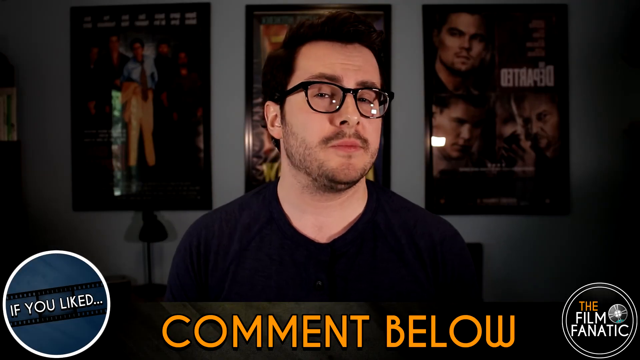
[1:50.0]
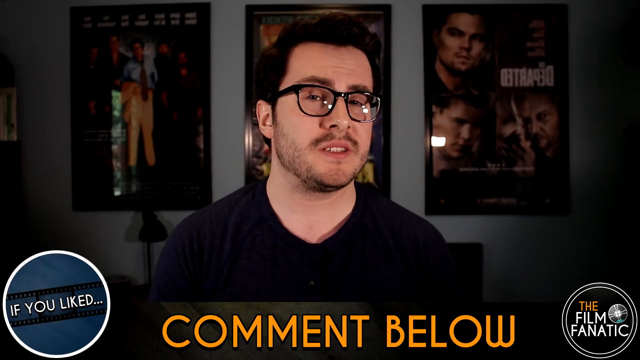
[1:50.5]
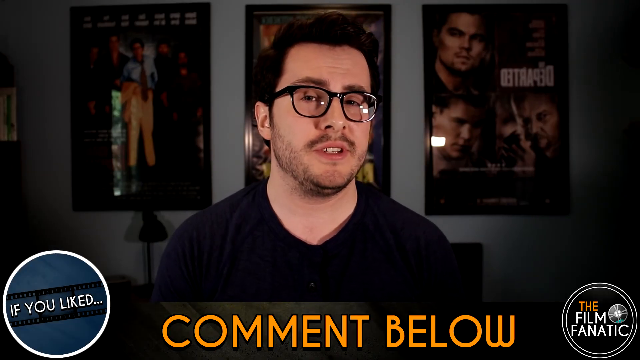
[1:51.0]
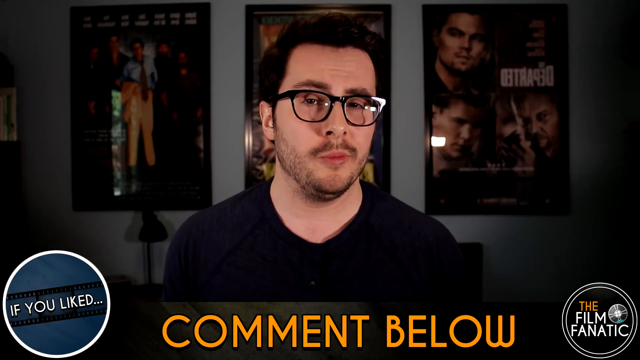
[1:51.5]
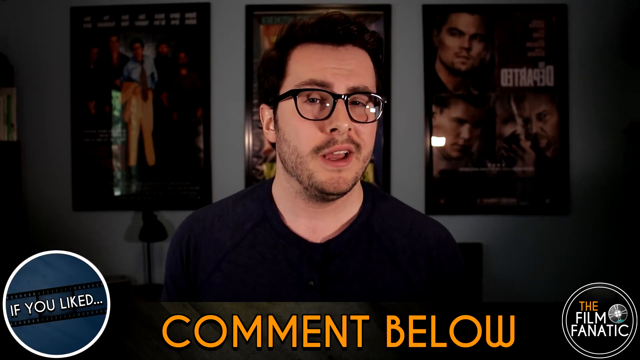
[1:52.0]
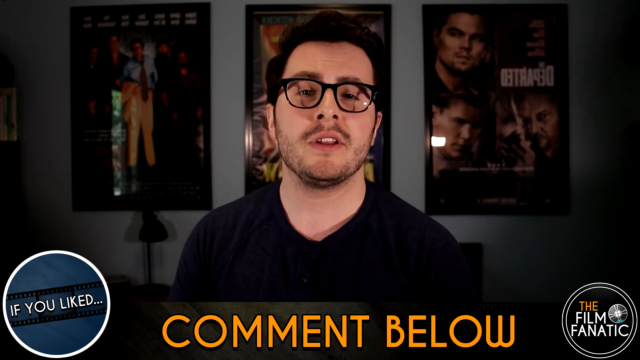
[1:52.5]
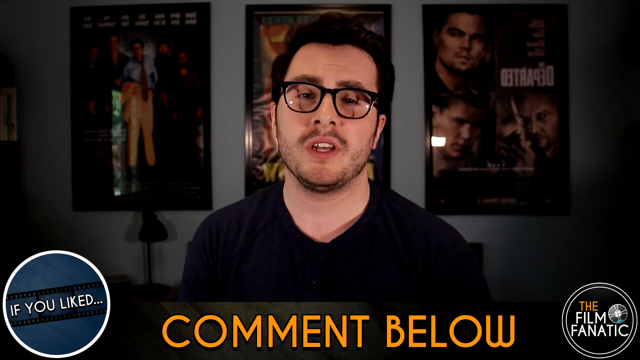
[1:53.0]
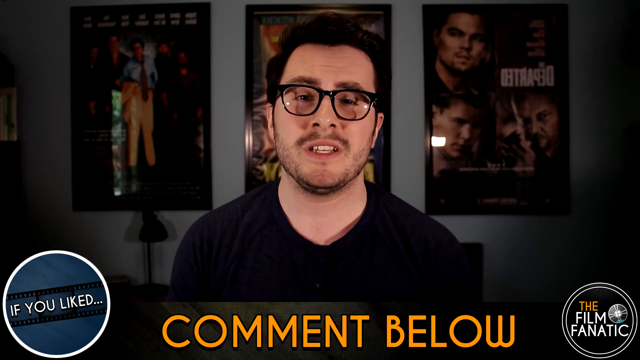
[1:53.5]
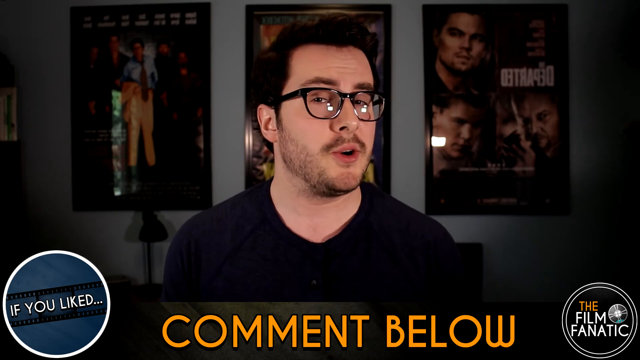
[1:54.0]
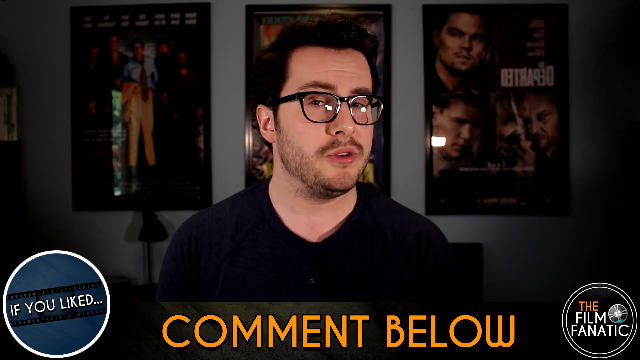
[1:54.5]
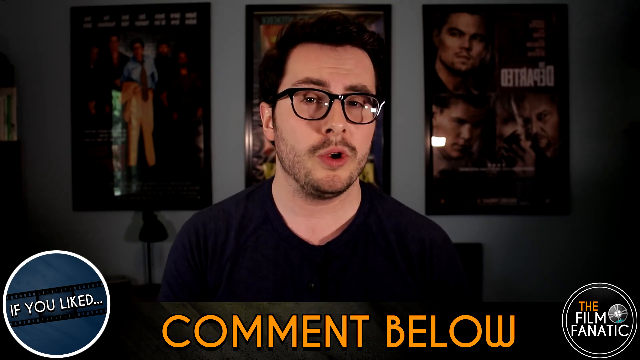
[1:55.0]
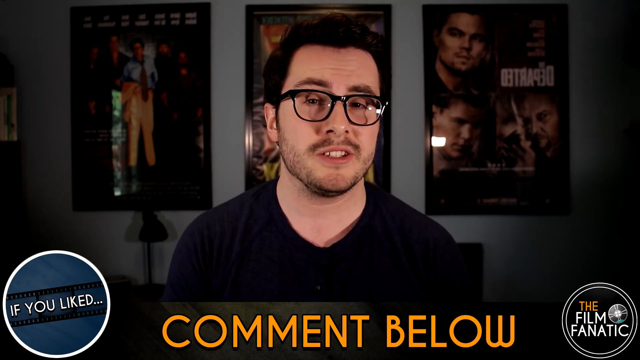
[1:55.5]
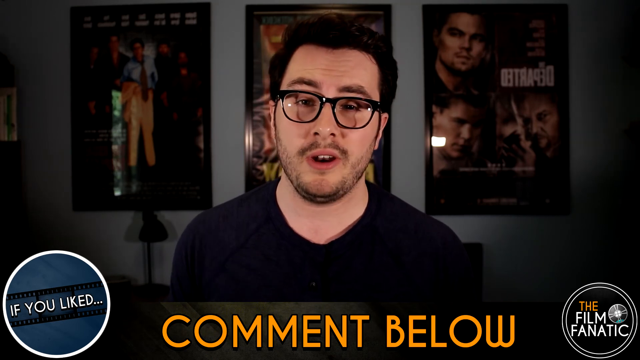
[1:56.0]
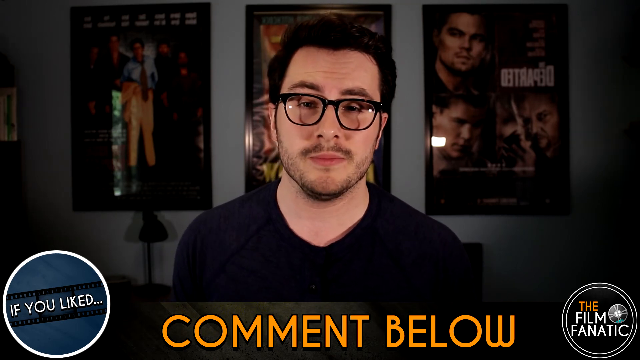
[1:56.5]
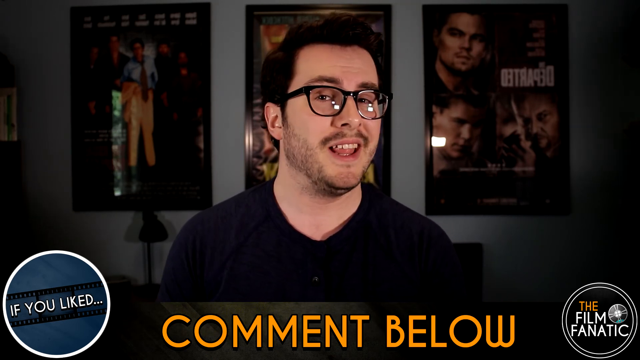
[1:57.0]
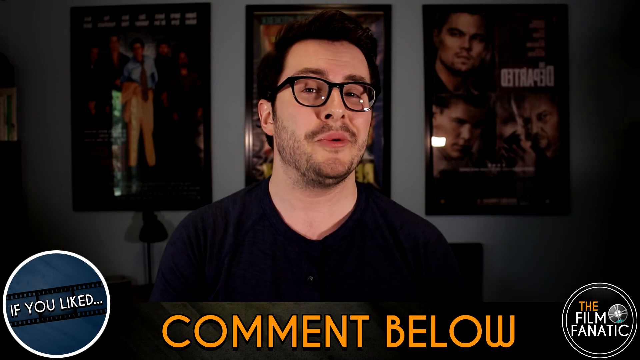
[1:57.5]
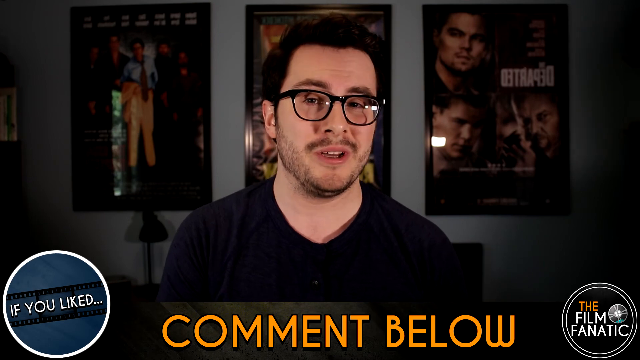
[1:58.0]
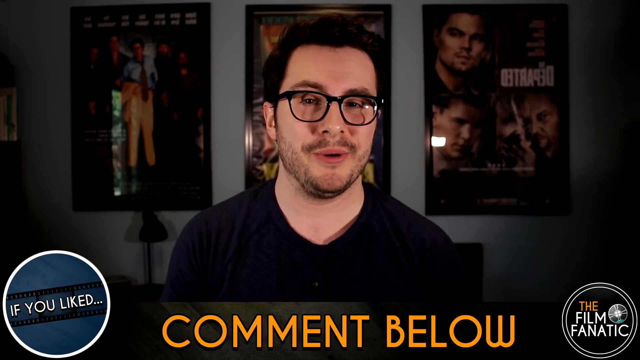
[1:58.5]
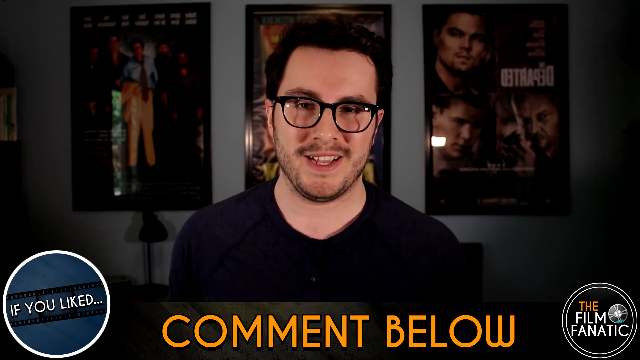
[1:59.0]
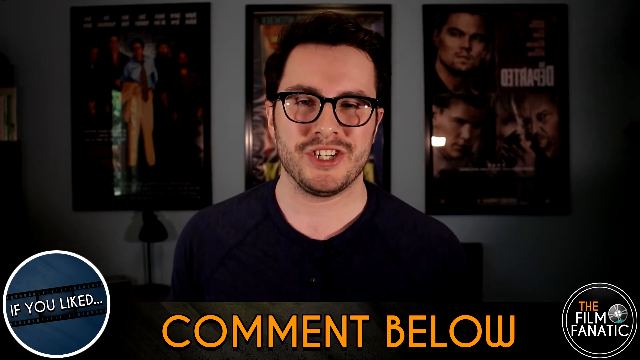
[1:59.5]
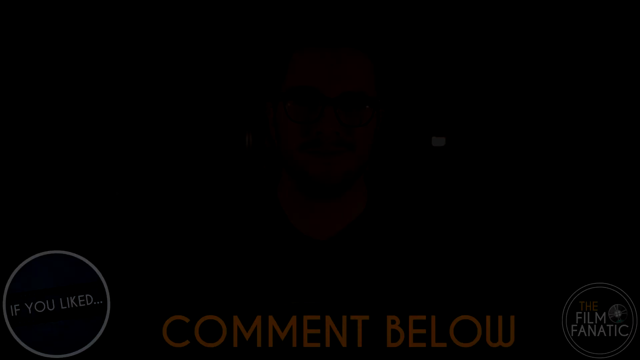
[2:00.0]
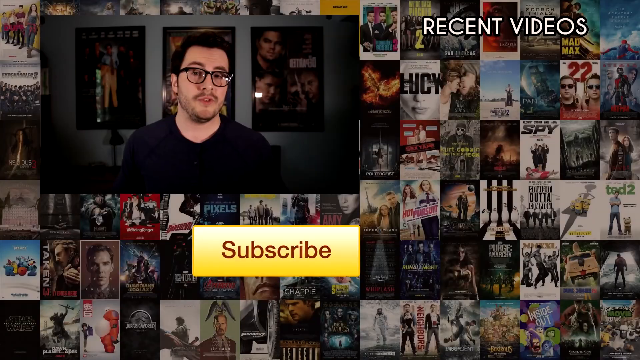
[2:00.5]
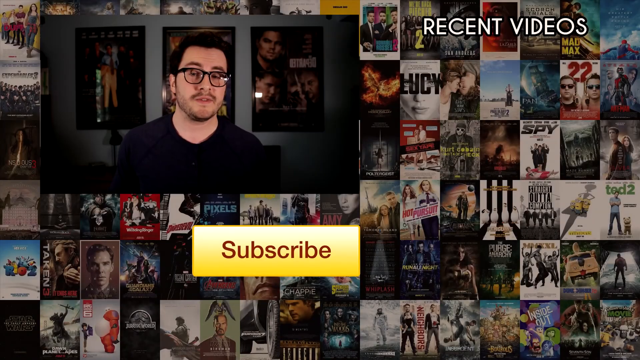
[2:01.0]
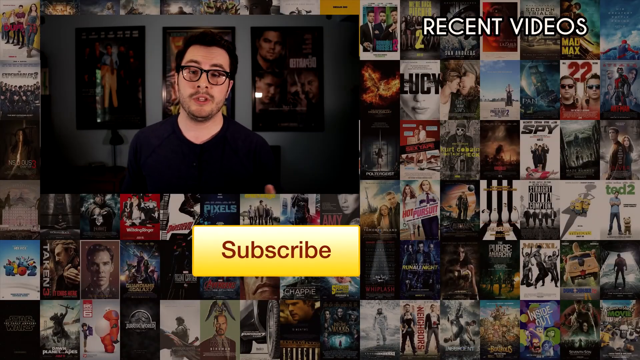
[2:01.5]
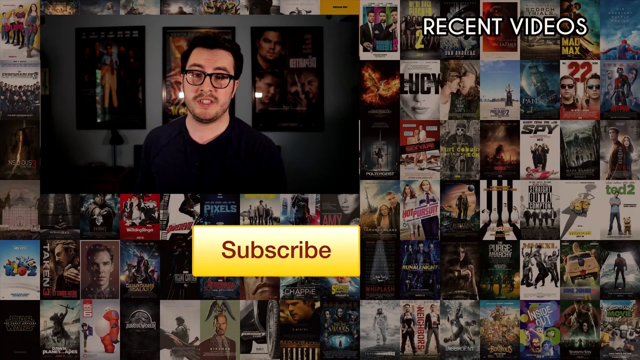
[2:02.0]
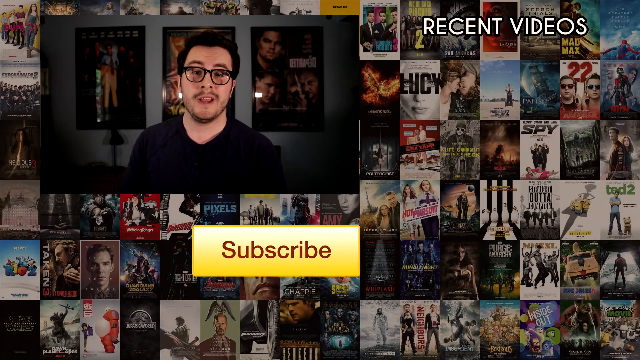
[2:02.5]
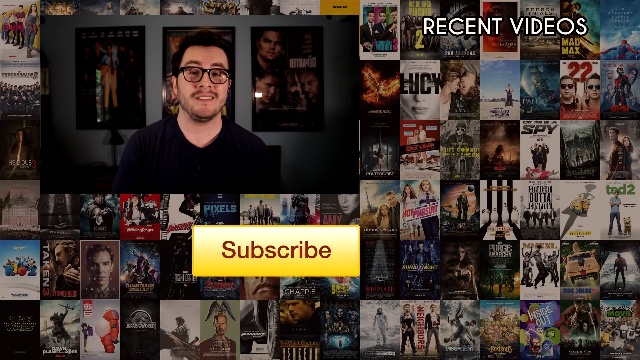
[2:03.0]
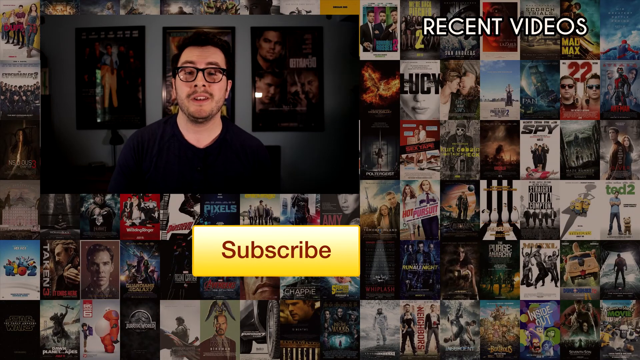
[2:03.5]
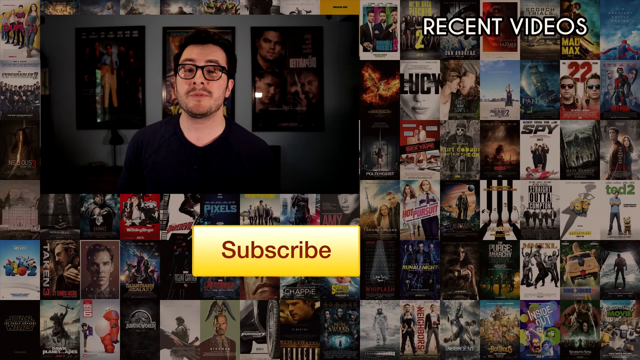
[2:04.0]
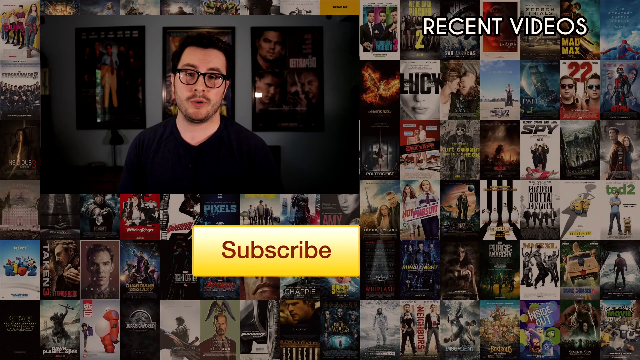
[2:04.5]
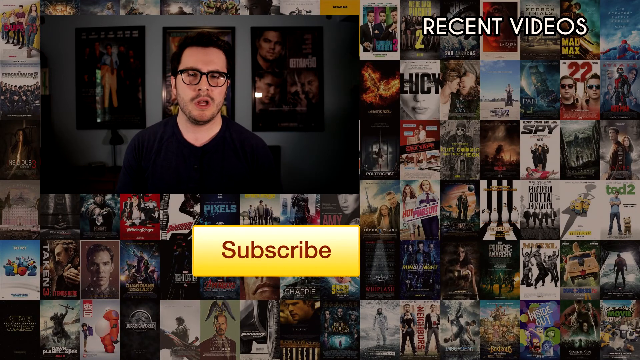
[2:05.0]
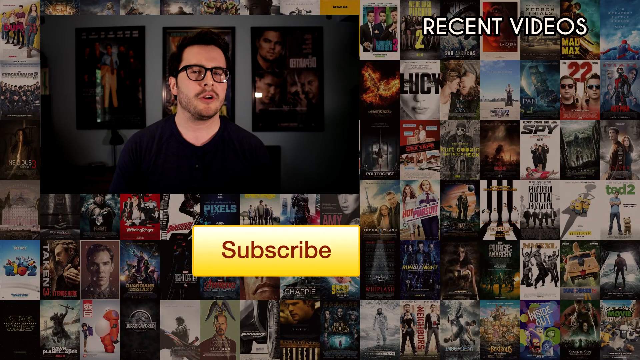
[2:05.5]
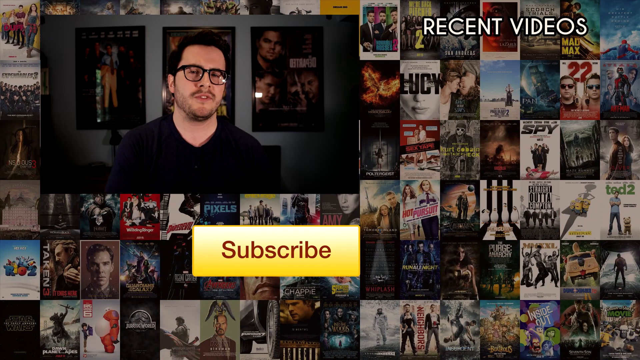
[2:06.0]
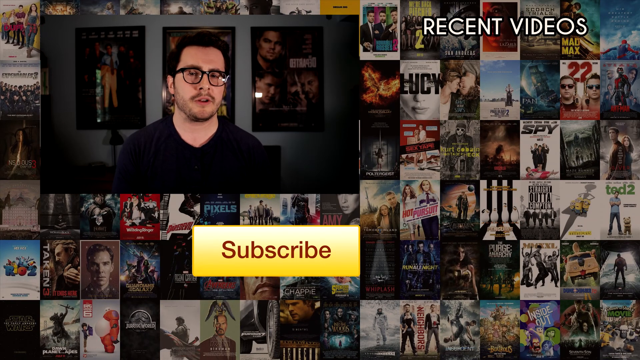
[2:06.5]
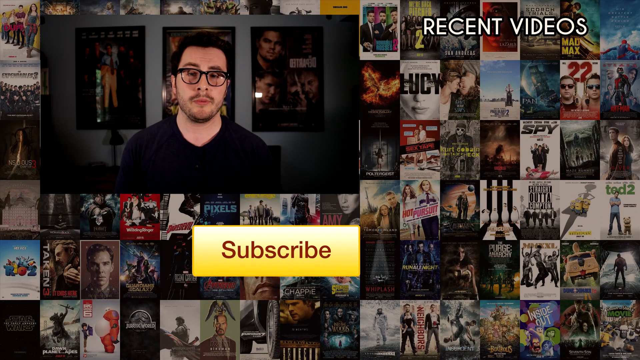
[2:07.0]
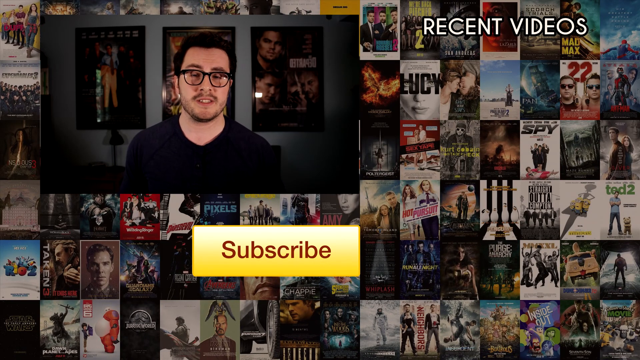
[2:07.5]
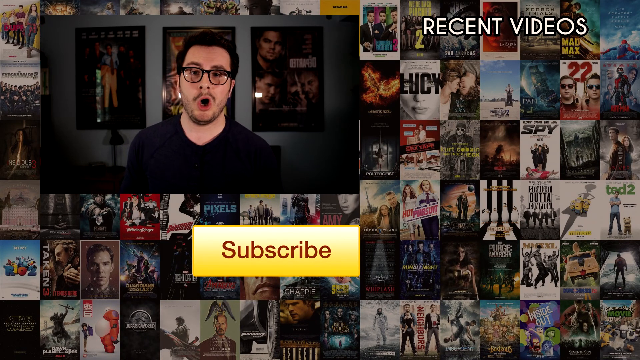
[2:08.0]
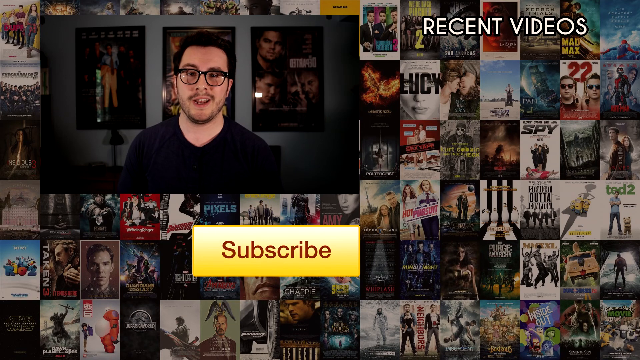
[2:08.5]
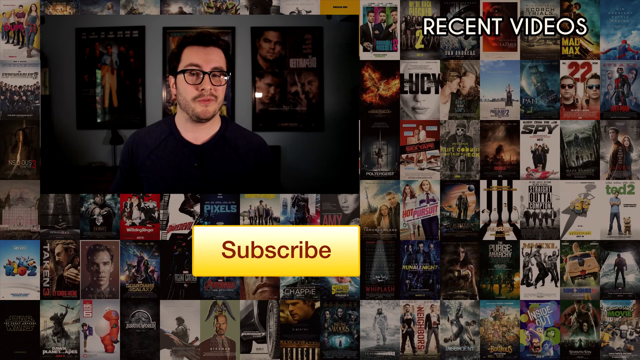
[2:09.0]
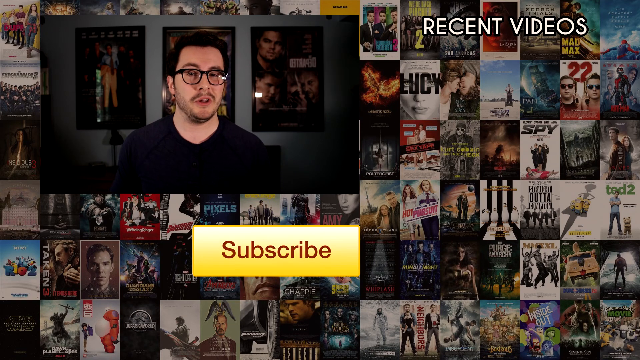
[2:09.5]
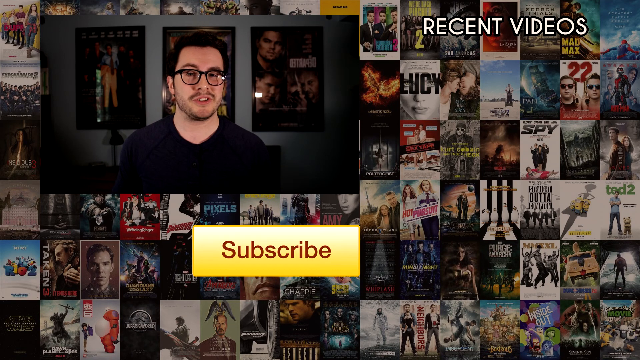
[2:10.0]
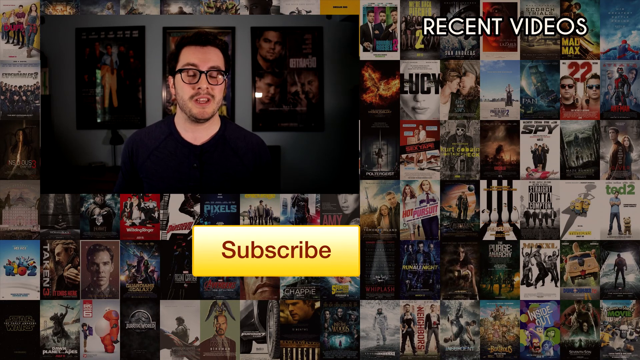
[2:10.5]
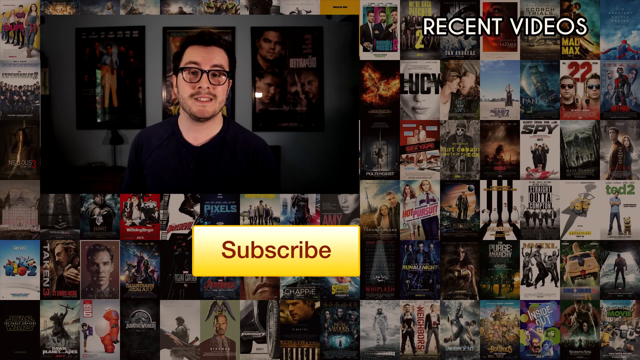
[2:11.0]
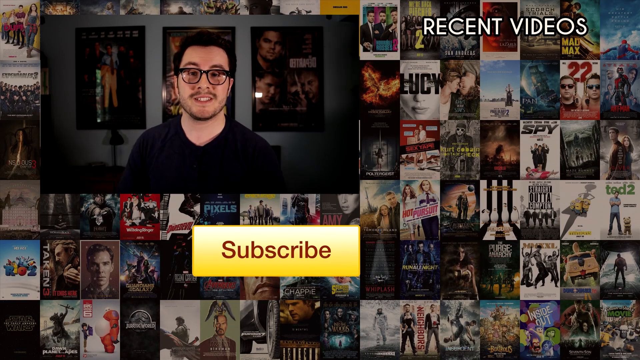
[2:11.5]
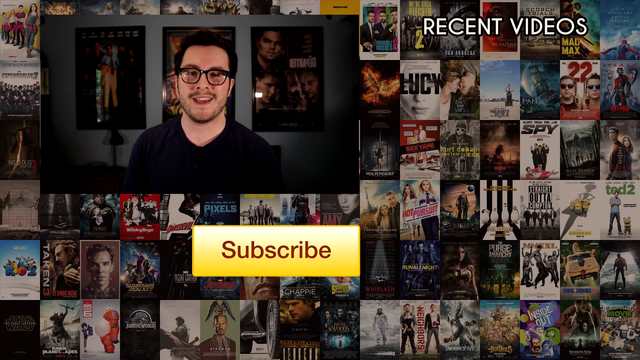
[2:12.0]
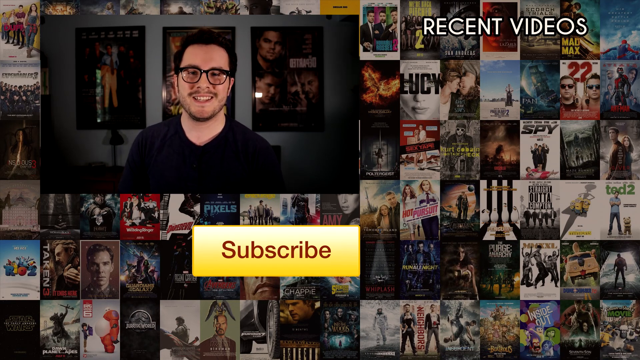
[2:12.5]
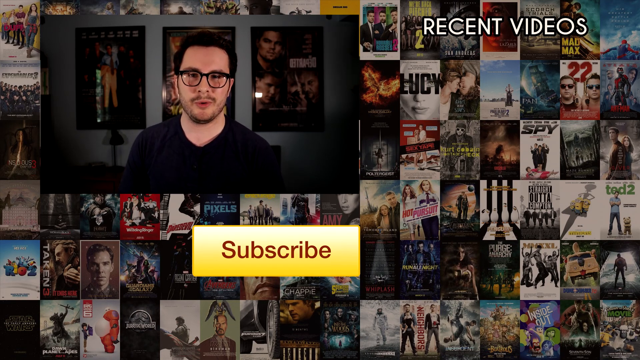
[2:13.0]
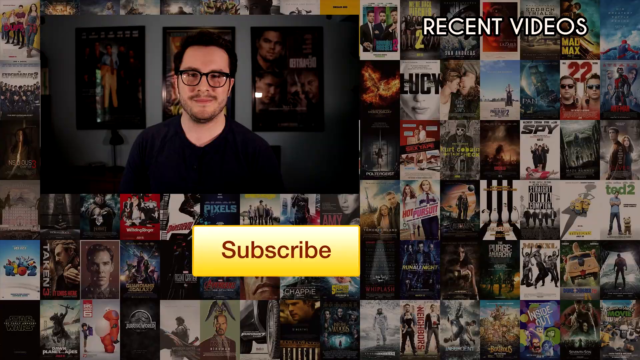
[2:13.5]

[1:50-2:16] The host continues talking while the words "COMMENT BELOW" are highlighted on the screen in very large letters. Soon after, a screen to subscribe to the channel appears, well highlighted in a very deep yellow with the word "SUBSCRIBE". Meanwhile, the presenter's face continues to appear in the corner of the screen, and at the bottom of the image are dozens and dozens of covers of very famous films under the words "RECENT VIDEOS".